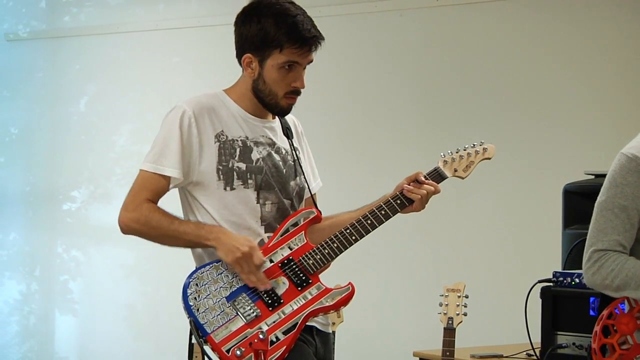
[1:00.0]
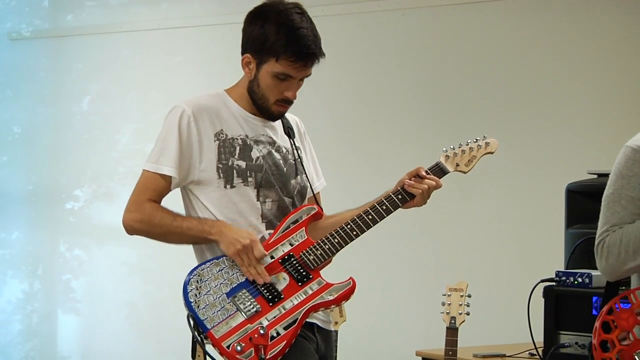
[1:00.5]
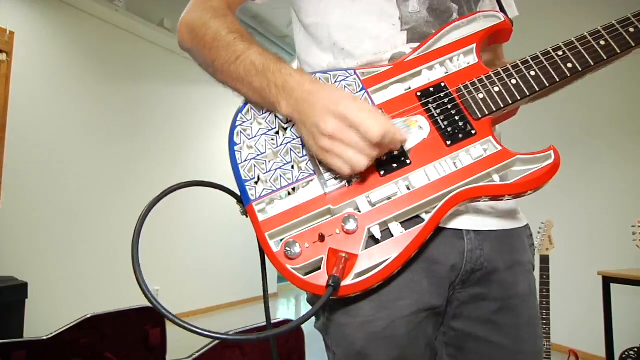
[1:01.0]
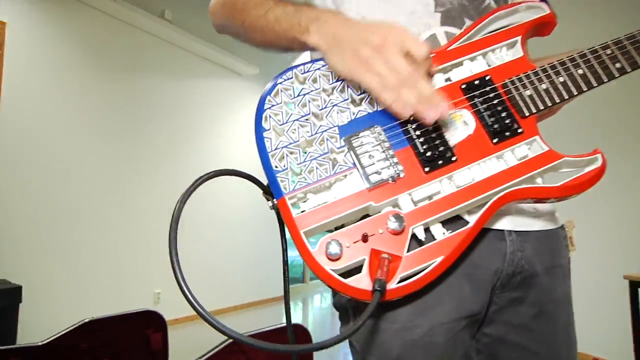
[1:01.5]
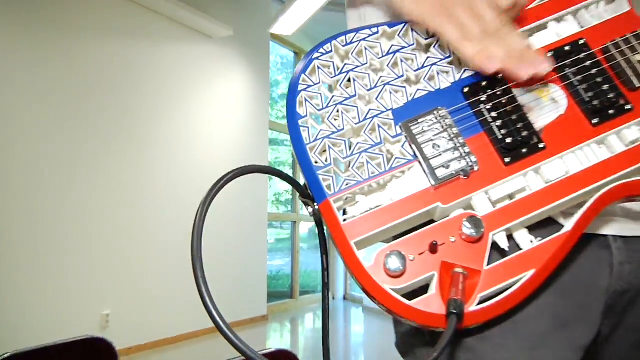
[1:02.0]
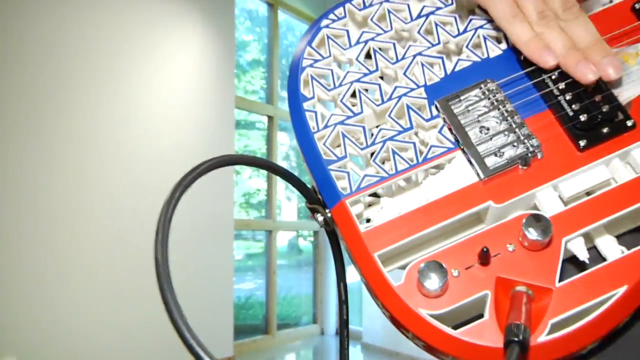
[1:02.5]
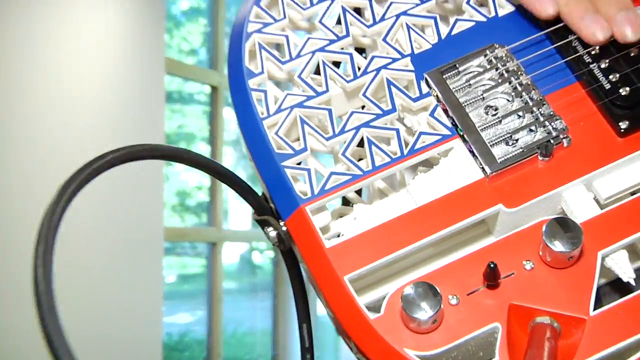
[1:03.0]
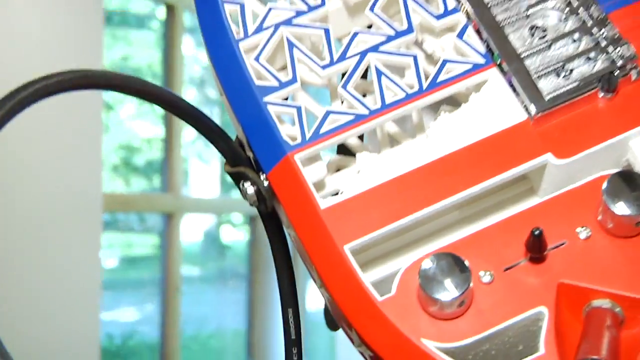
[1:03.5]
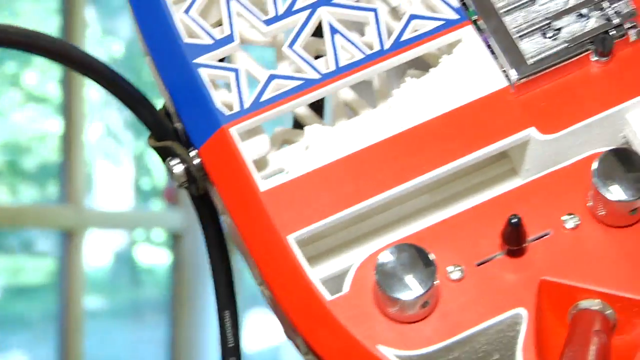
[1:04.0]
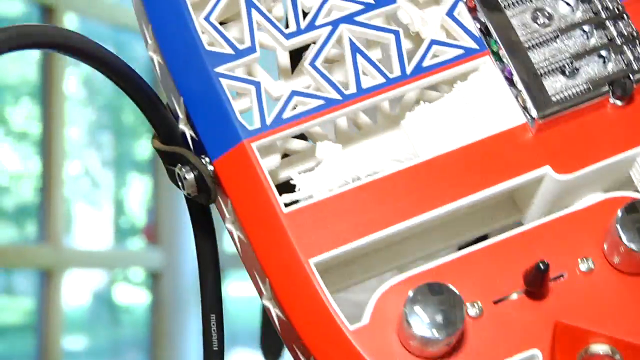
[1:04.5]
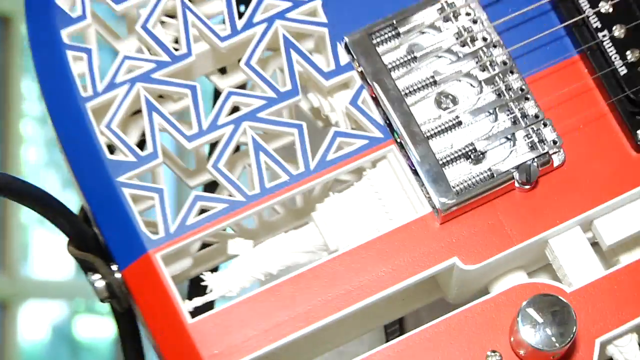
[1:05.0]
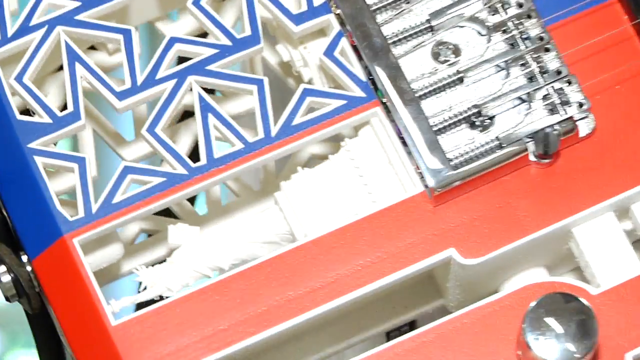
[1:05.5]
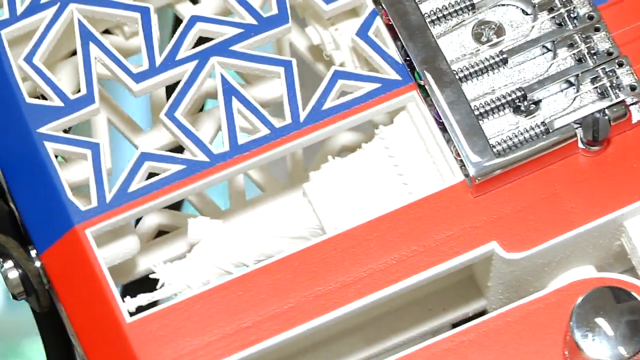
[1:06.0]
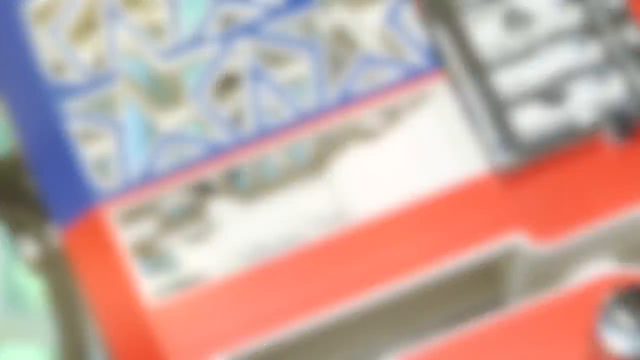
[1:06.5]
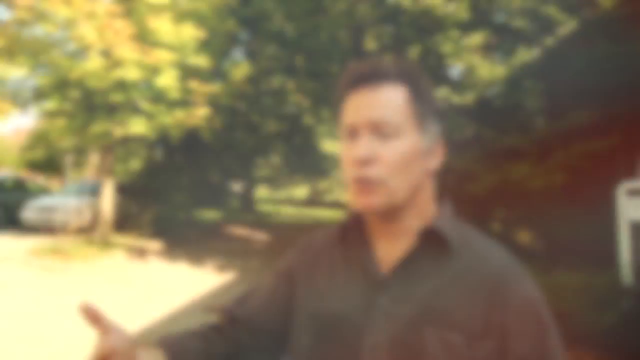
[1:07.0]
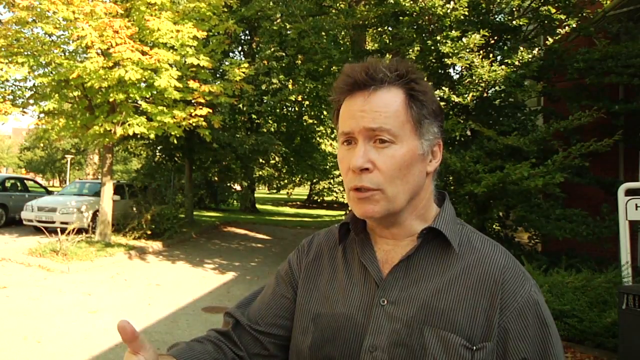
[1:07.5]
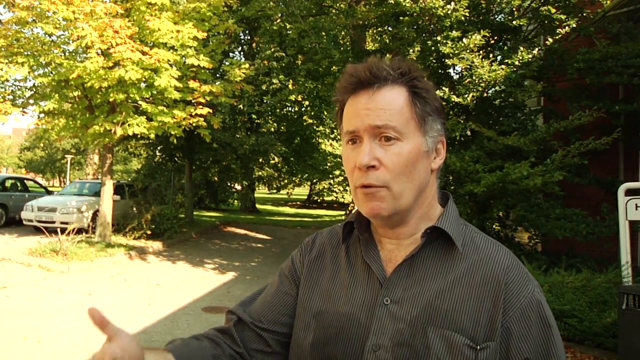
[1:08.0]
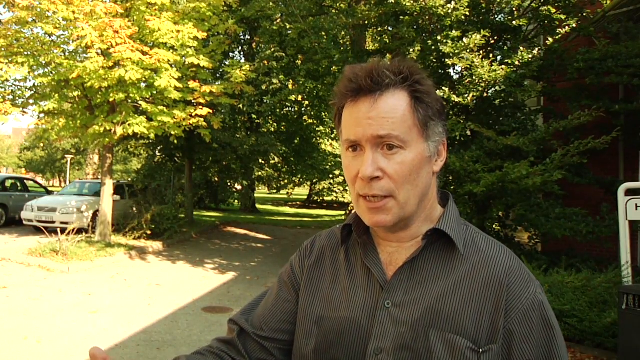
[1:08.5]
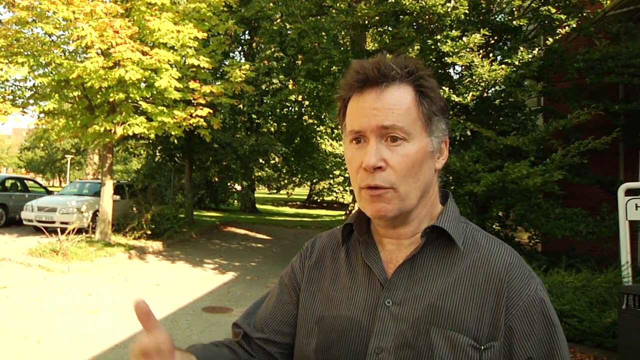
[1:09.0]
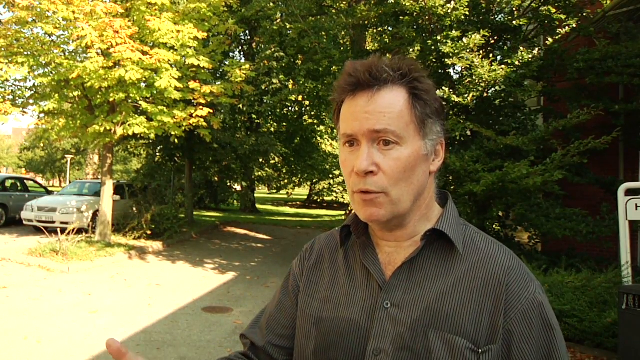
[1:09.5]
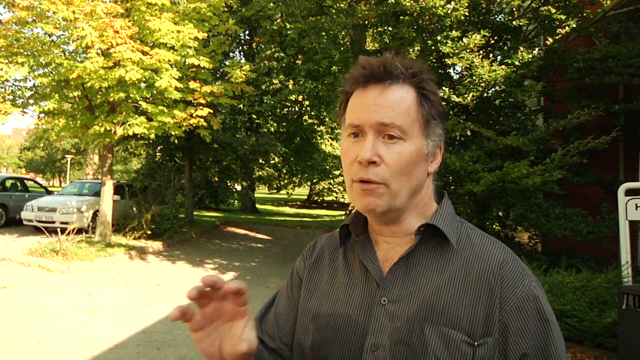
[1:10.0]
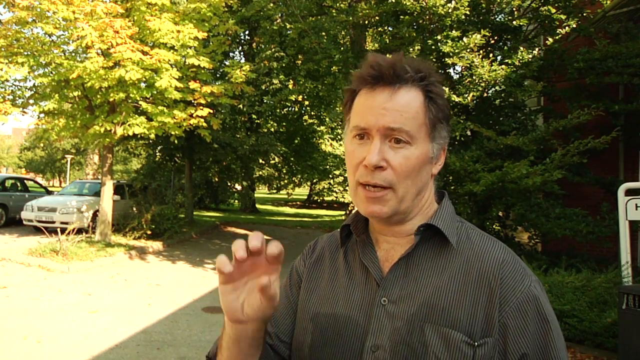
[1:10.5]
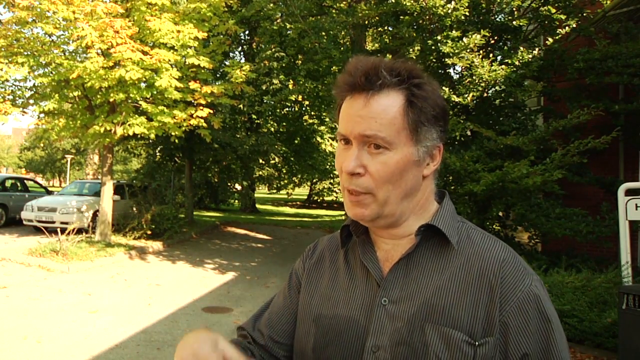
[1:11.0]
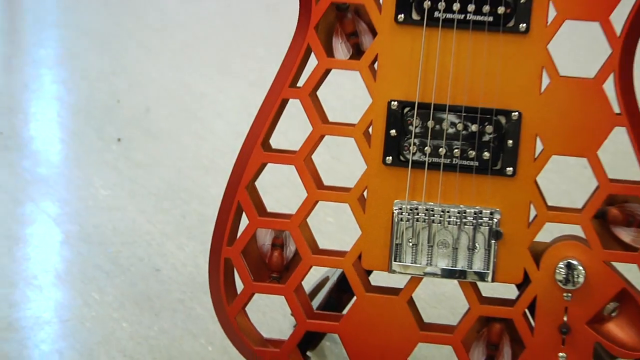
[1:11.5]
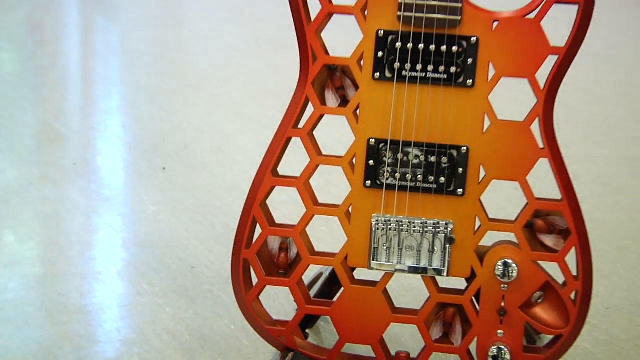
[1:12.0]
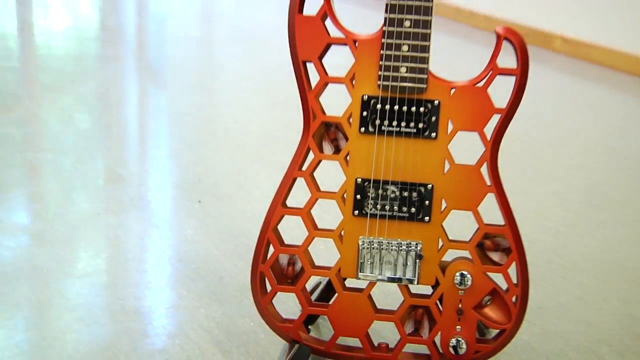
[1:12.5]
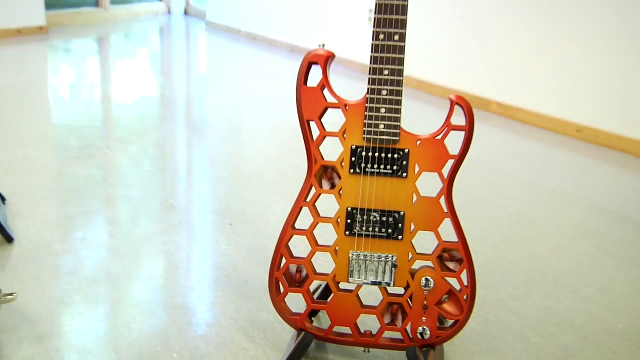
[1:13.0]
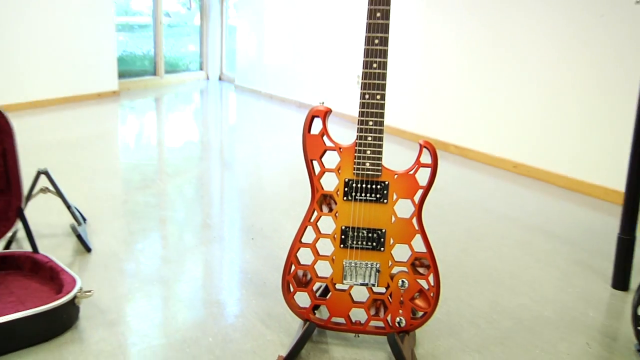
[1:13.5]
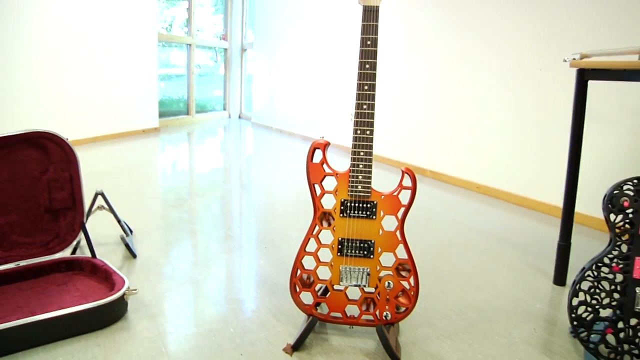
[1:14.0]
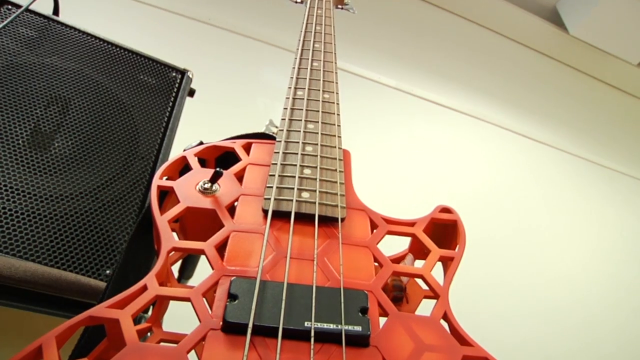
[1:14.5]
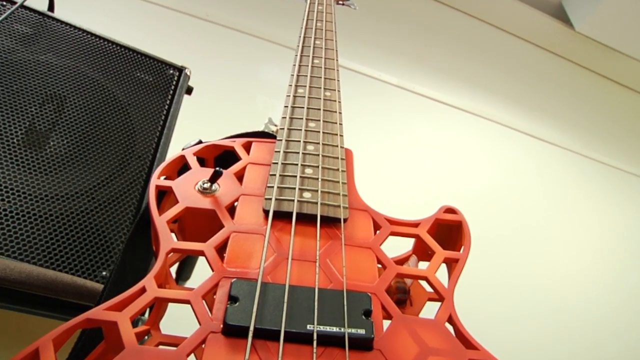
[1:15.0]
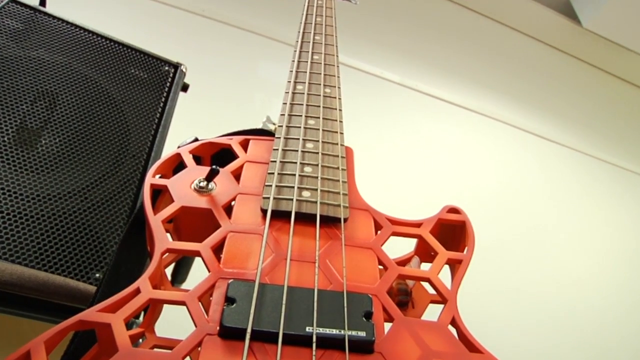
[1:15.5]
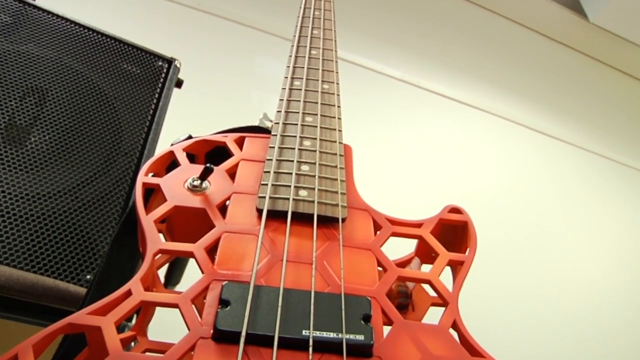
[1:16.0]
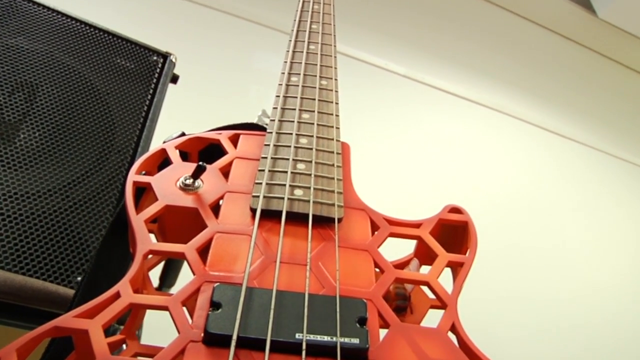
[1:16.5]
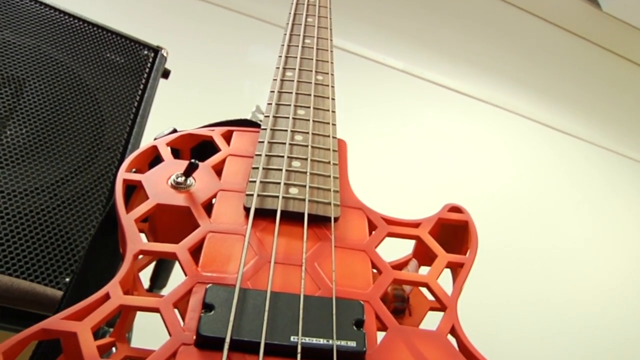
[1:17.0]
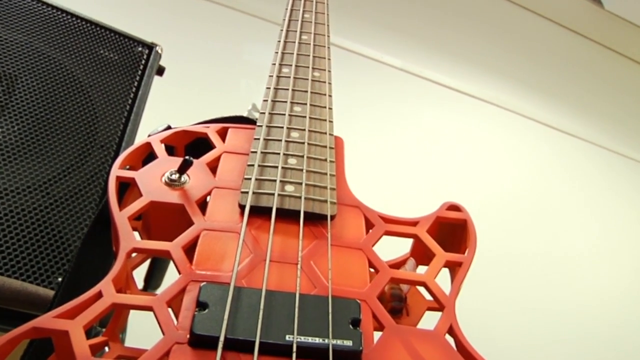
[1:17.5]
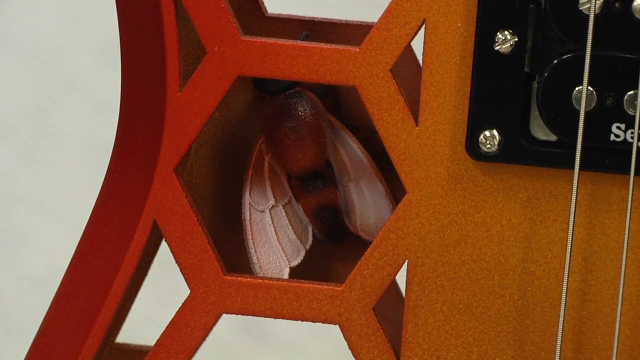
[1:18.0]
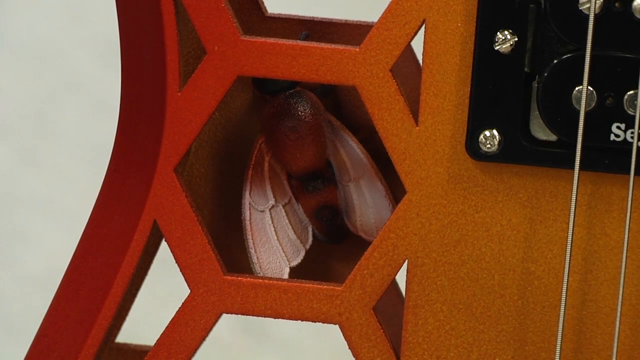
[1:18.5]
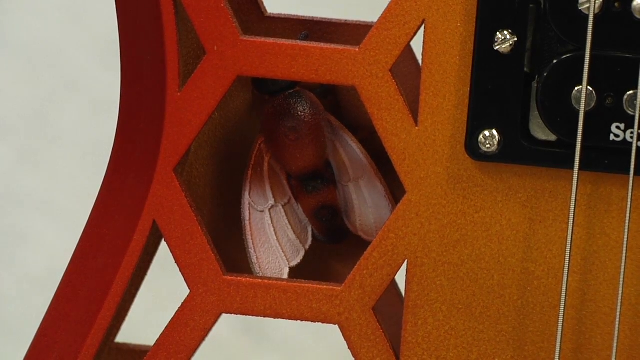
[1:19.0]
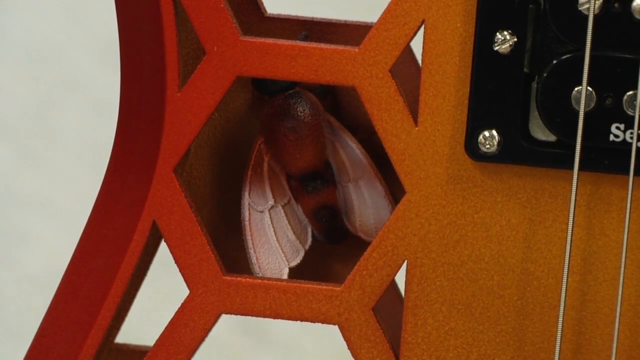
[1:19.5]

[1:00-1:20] The guy is sitting, playing the American flag guitar. The camera zooms in real close on it, so the stars are clearly visible. The professor appears again, standing outside in what looks like a parking area, with two light-colored cars parked a few feet from him, including a sedan up front. The full body of neither car is visible, and both look a little dated. It is a sunny day: the sun is visible, there is a reflection on the ground, and trees surround him. It looks like a talking-head interview. Then the red guitar from the beginning appears in some close-up shots, and the guy who was playing it is seen very briefly. A little of the fake bug at the back of the guitar is also visible.